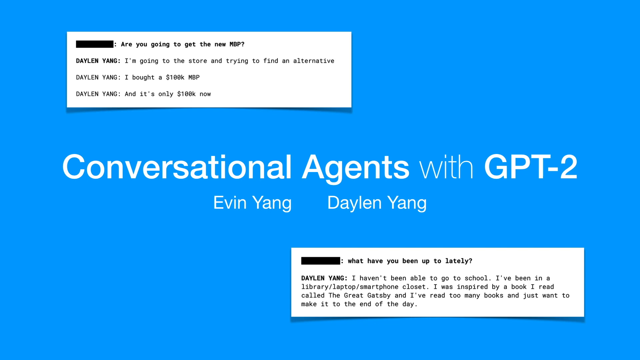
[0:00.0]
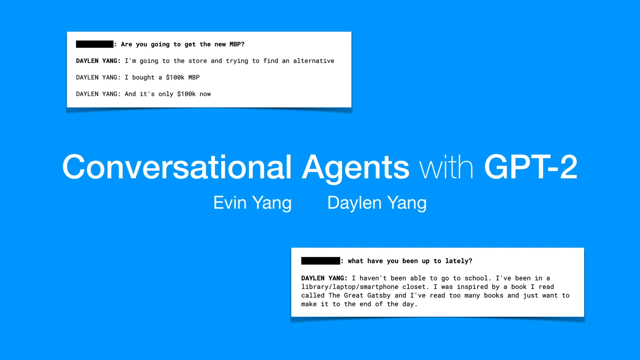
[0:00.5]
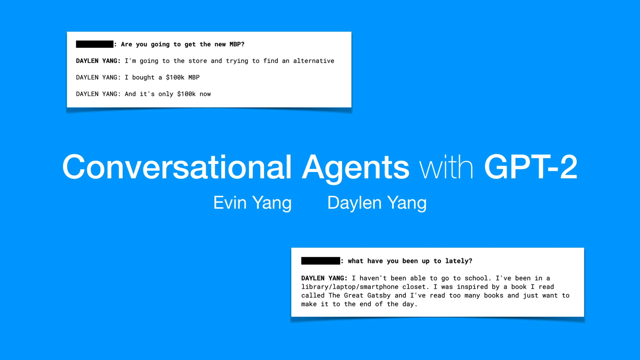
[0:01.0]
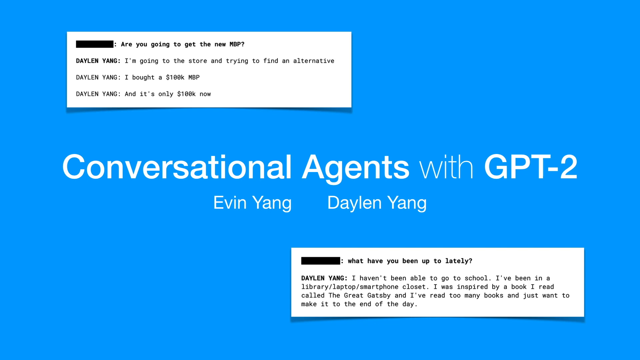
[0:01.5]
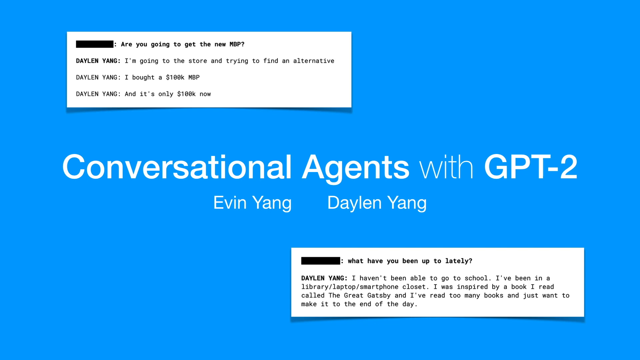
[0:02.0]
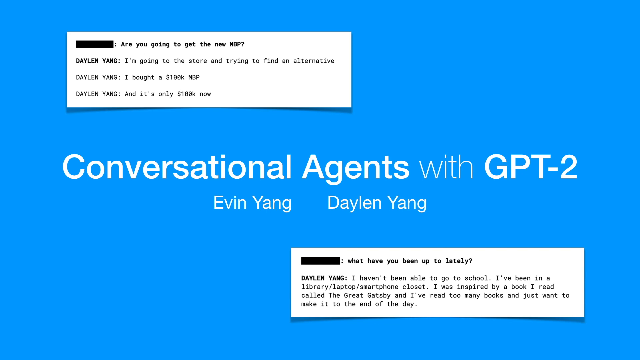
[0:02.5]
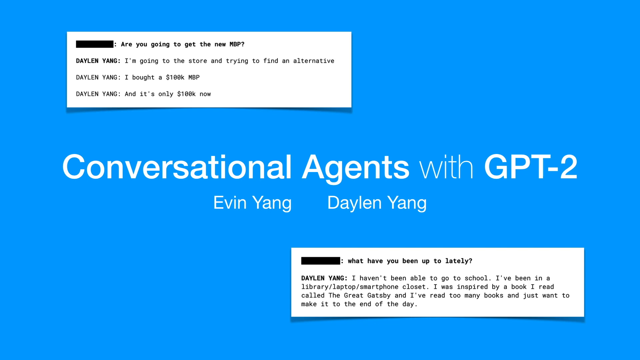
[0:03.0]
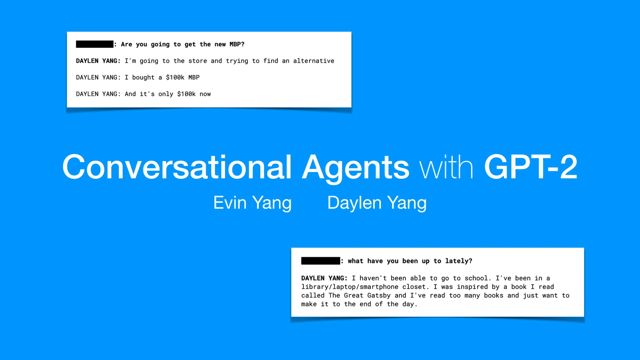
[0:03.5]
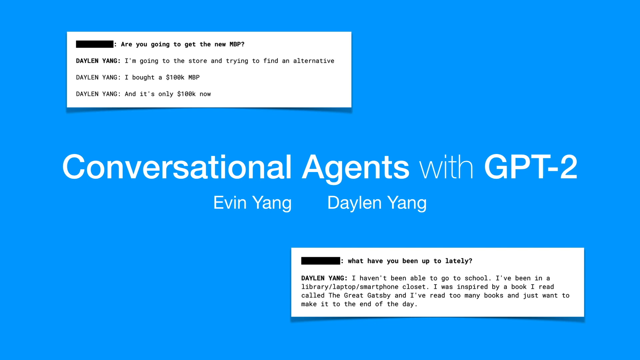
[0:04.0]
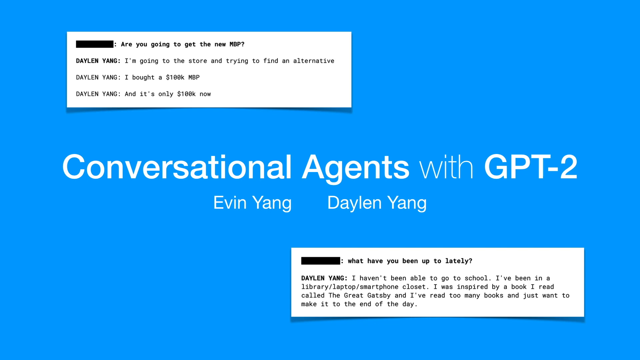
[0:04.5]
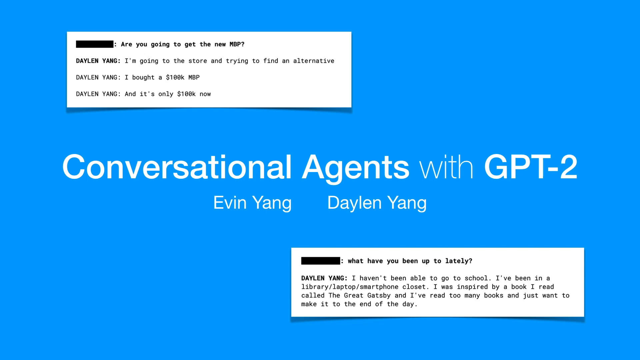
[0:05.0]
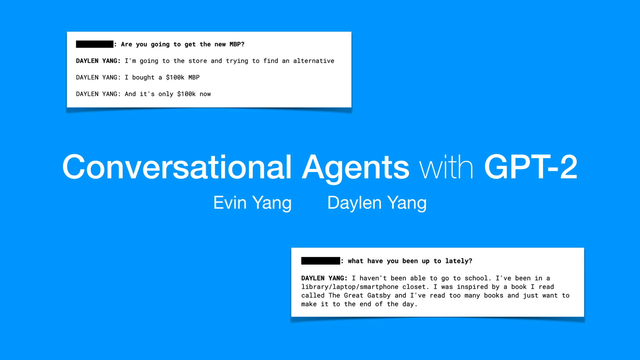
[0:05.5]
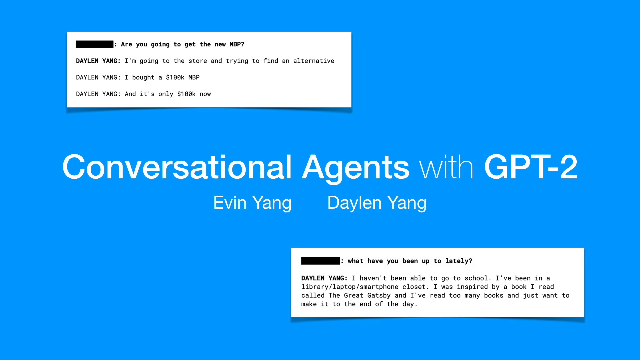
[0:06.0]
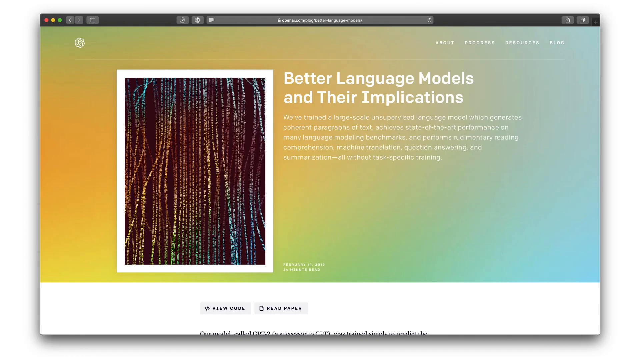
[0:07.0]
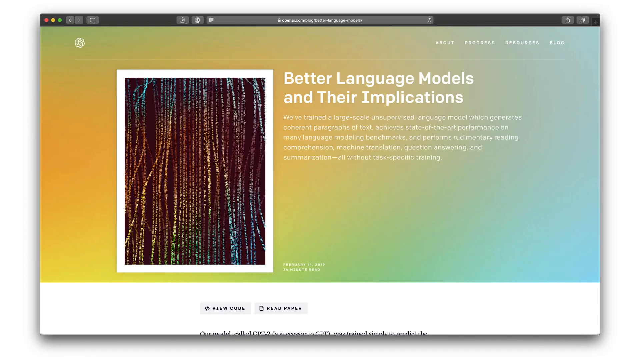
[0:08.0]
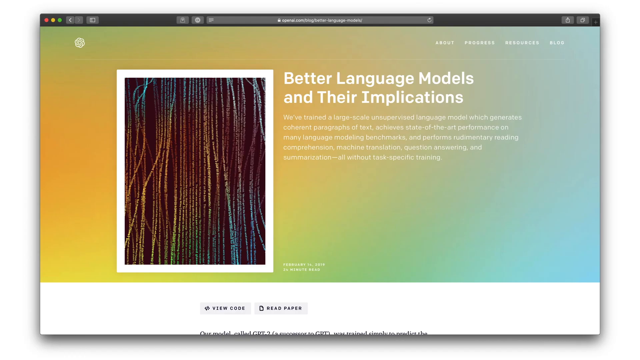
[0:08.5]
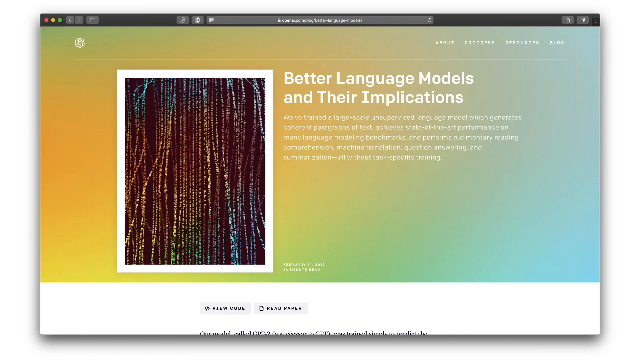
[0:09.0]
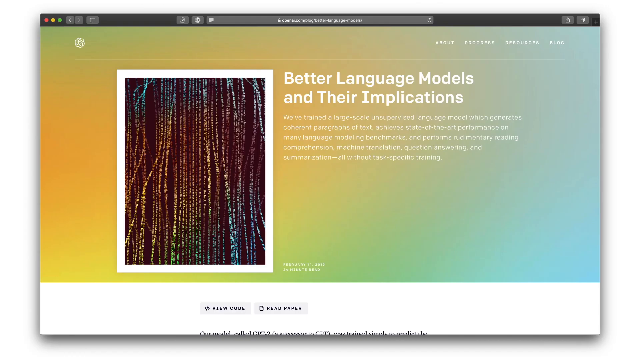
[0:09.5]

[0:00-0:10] The video shows what appears to be a PowerPoint presentation on conversational agents with GPT2, with the names Evan Yang and Dylan Yang on screen. The opening slide is essentially blue and contains two clips of what seem to be the two people talking with Chat-GPT, along with the responses. The video then cuts to a webpage that reads "Better Language Models and Their Implications," with an unreadable paragraph beneath it. The background is multicolored, yellow and blue, with the colors sort of fading into each other. There is a picture of what look like strands of computer inputs; it is hard to tell, but the image is stringy.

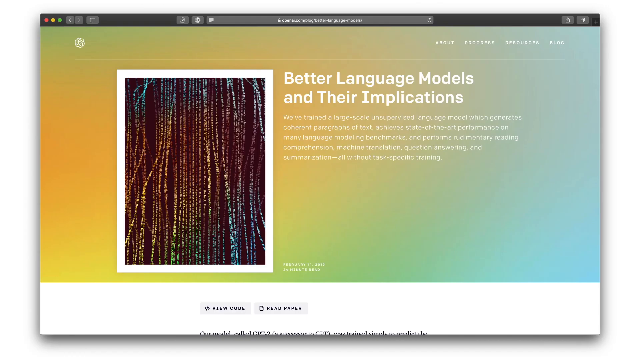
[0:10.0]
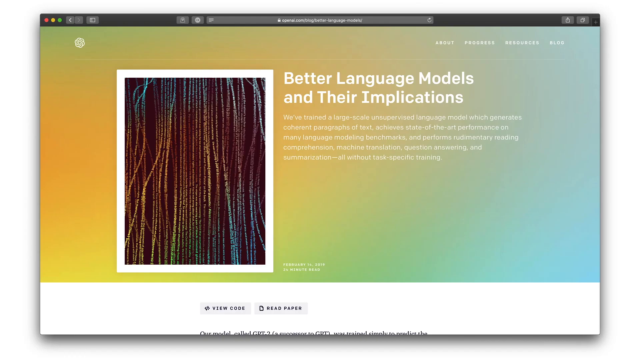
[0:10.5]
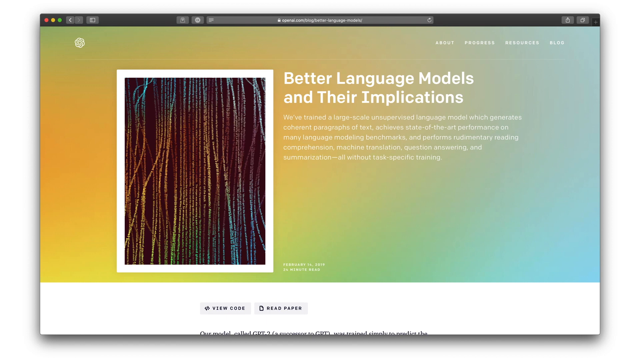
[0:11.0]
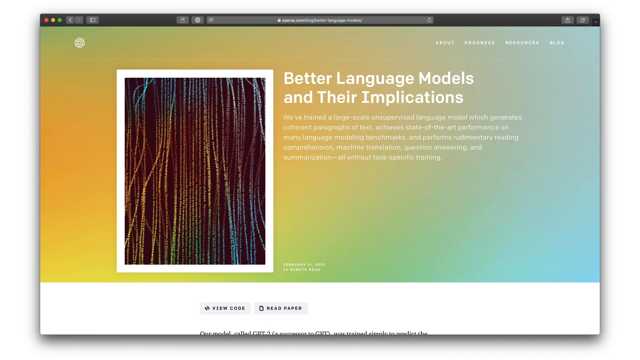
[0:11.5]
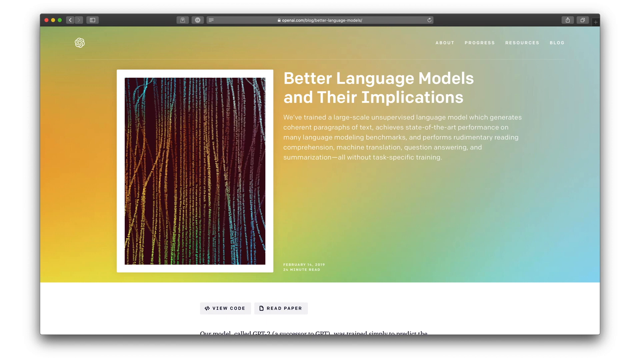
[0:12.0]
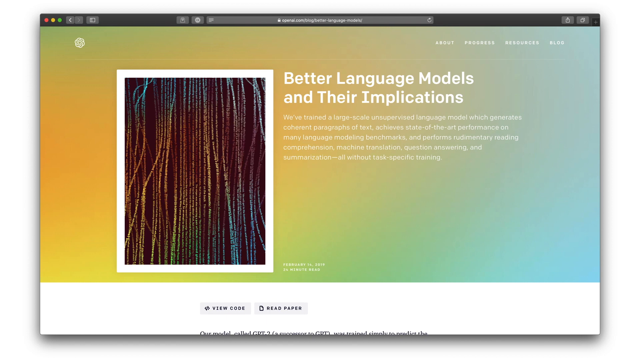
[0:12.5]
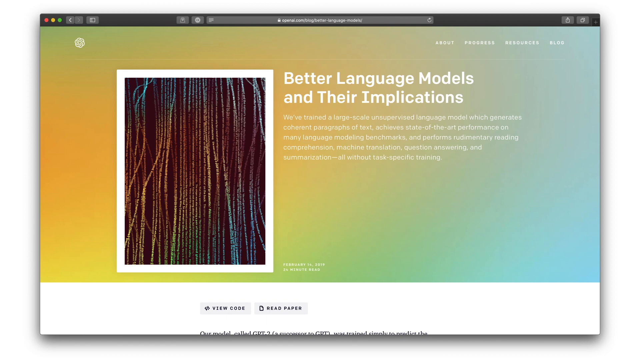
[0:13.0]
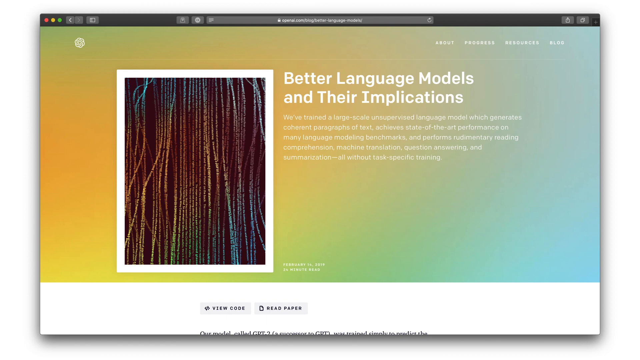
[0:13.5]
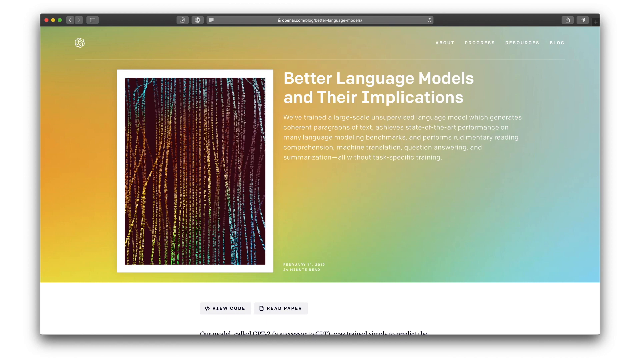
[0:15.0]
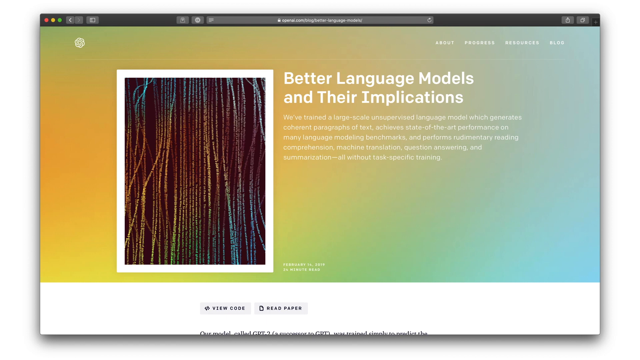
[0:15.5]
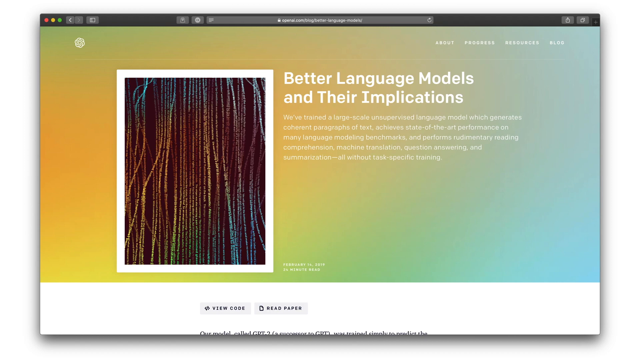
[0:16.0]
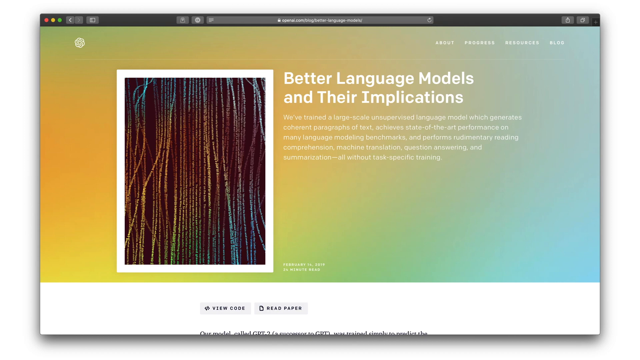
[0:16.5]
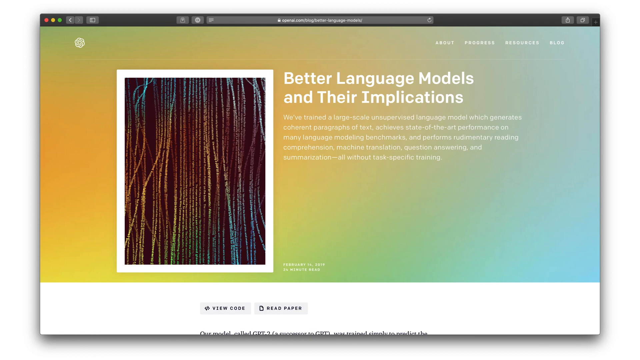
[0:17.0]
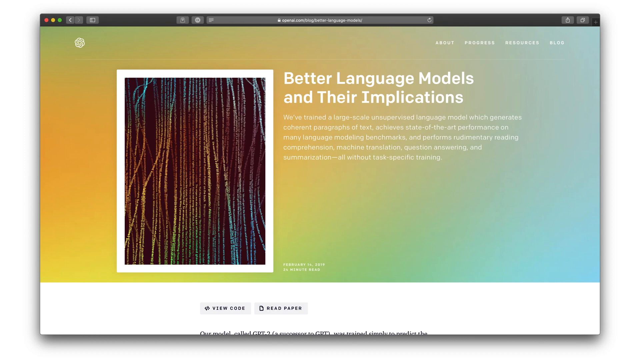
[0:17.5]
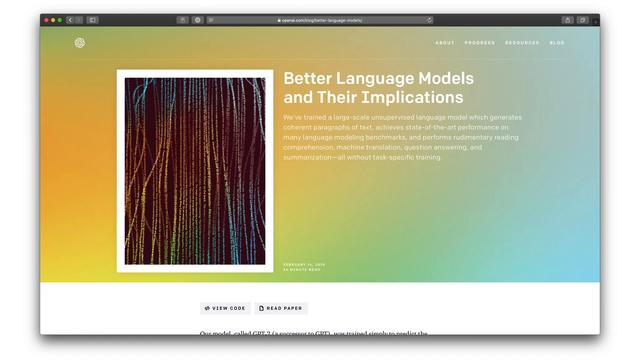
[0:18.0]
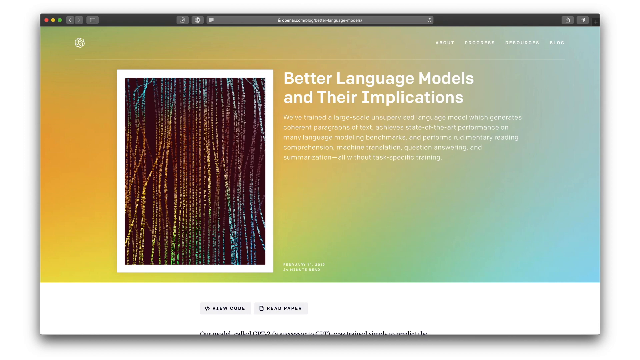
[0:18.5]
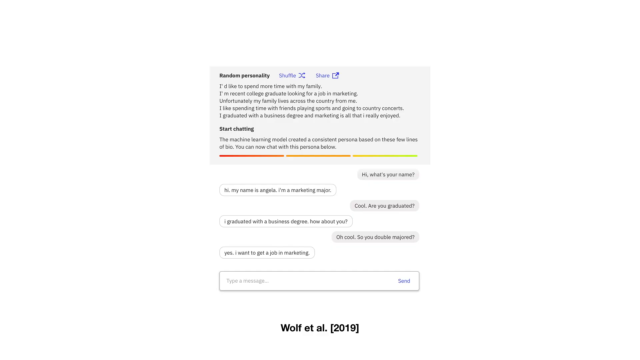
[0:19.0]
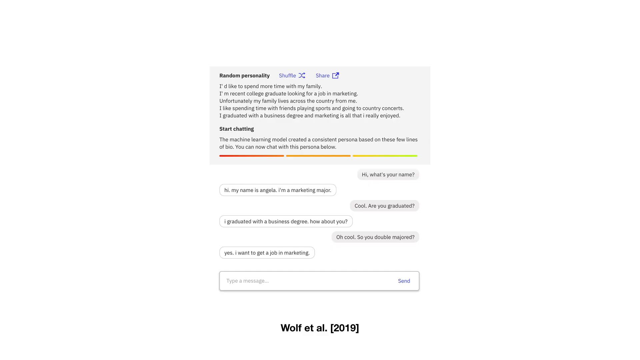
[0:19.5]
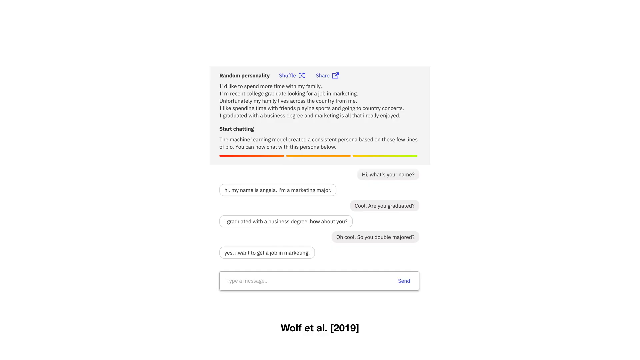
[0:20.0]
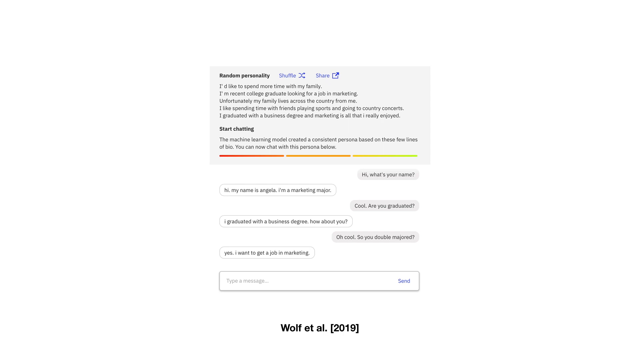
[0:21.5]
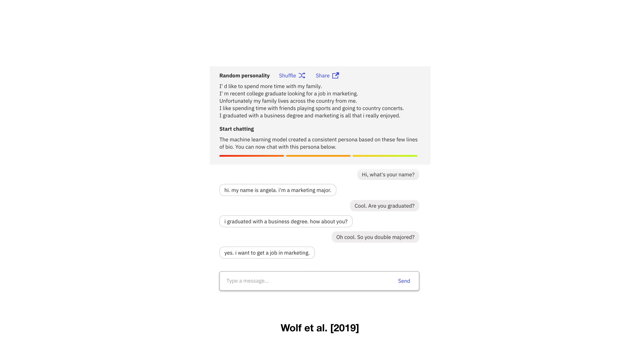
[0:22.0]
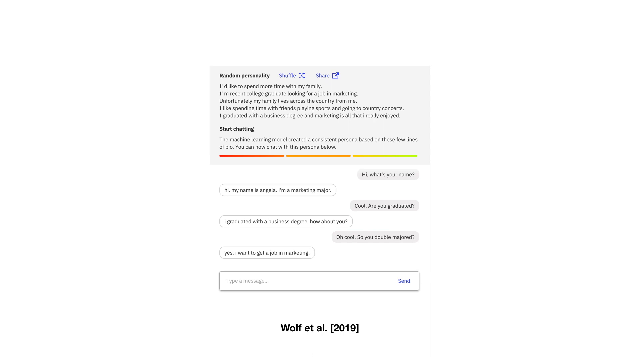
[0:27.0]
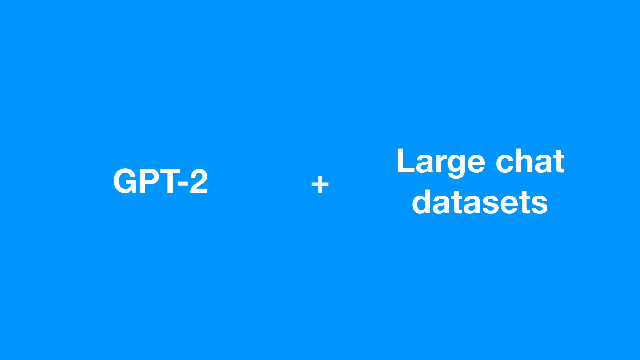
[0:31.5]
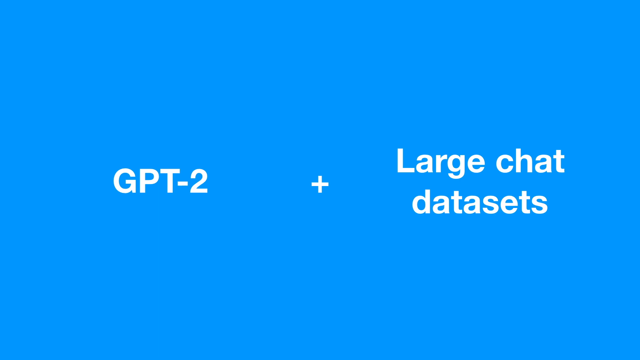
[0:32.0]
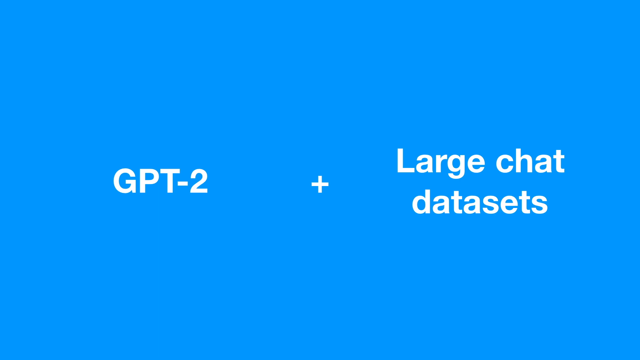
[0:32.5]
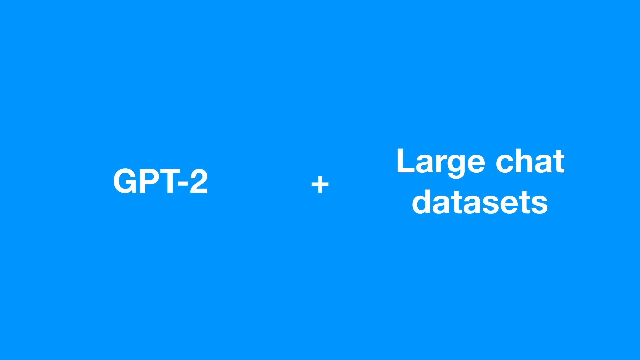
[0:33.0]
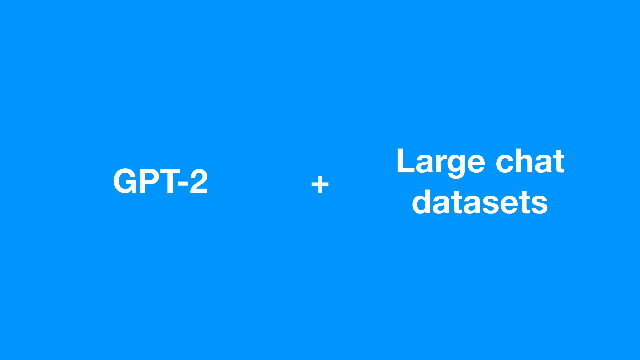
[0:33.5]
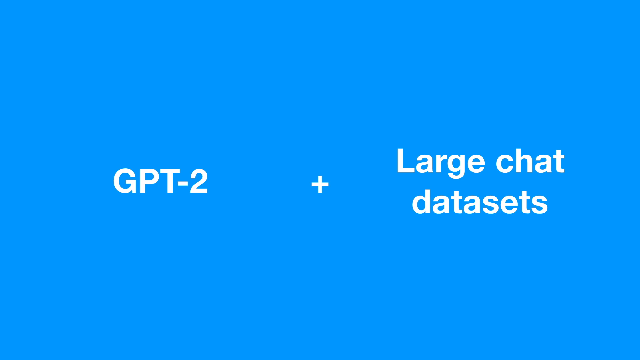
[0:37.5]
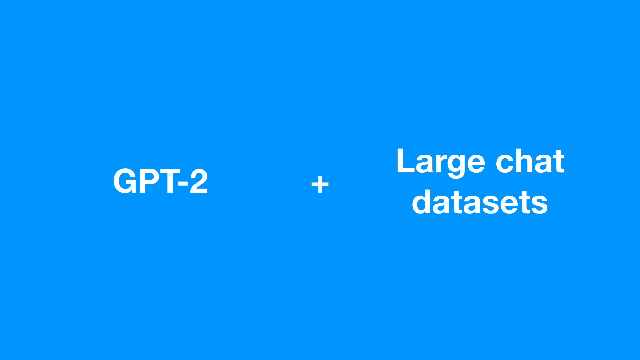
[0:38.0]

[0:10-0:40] The webpage reading "Better Language Models and Their Implications" stays on screen, with the same tiny, unreadable text beneath it and the same yellow and blue background. The browser appears to be Opera or whichever one is used on Macs. After about 10 seconds the video cuts to a white screen with what appears to be a prompt in the middle where someone is talking to GPT. The words are too tiny to make out, but there seem to be some suggestions, and beneath them are the actual responses between the person and GPT, along with a small box for typing a message and a copyright notice at the bottom. This screen stays up for probably a little over 10 seconds, then the video cuts to a blue slide with the words "GPT-2 plus large chat data sets," which stays on for maybe about seven or eight seconds.